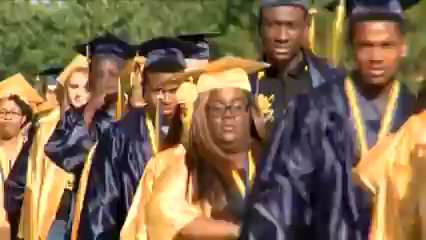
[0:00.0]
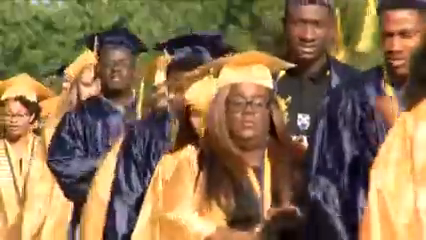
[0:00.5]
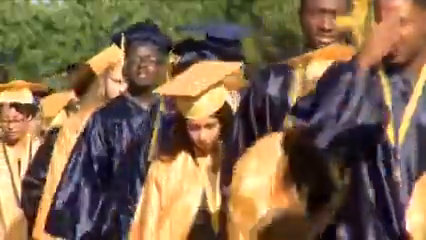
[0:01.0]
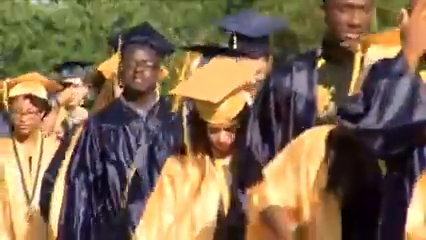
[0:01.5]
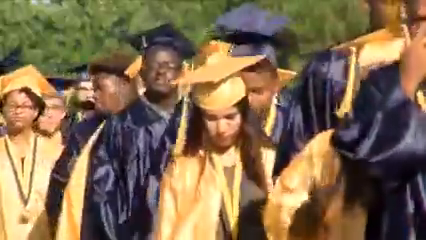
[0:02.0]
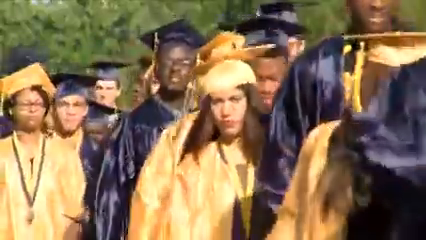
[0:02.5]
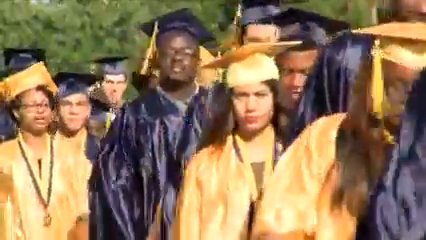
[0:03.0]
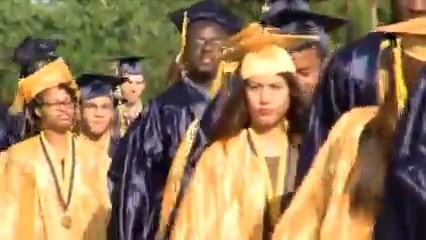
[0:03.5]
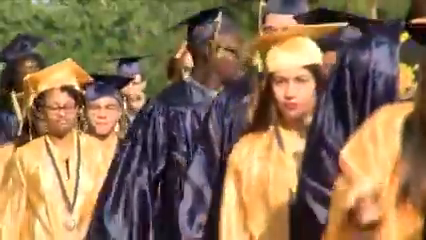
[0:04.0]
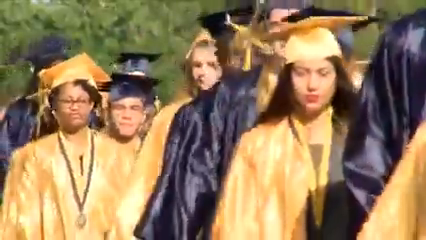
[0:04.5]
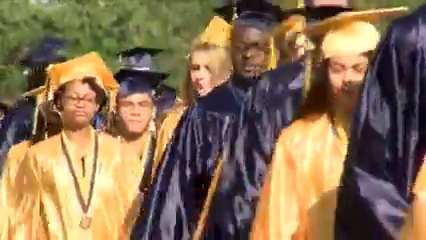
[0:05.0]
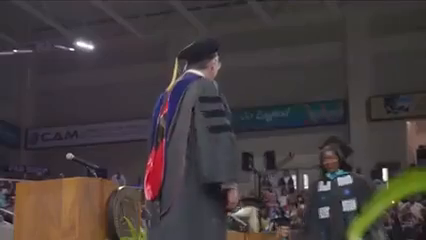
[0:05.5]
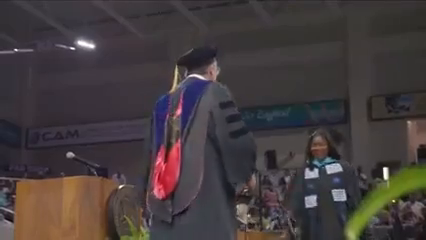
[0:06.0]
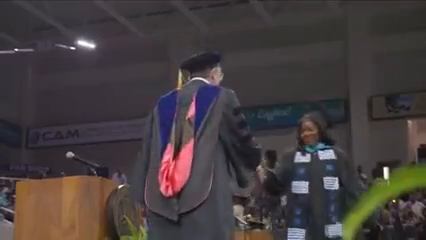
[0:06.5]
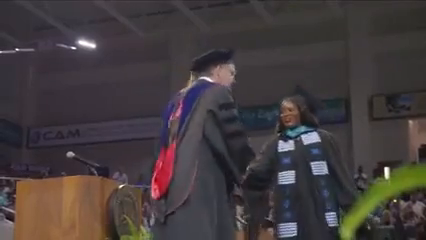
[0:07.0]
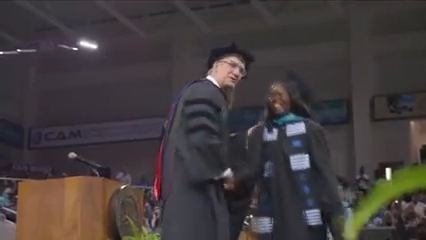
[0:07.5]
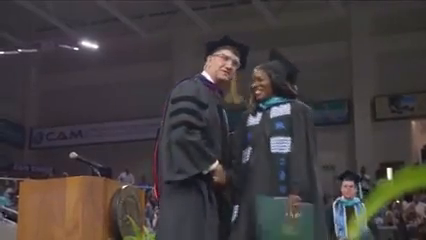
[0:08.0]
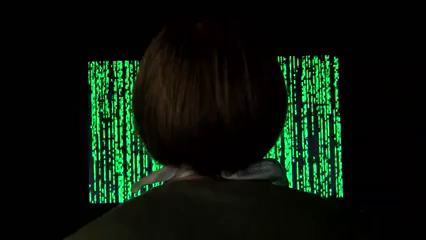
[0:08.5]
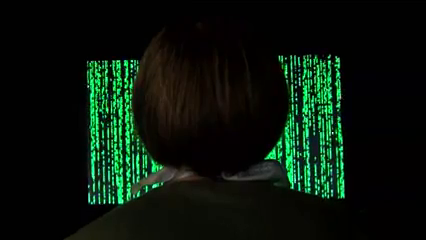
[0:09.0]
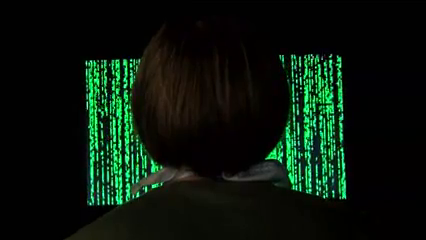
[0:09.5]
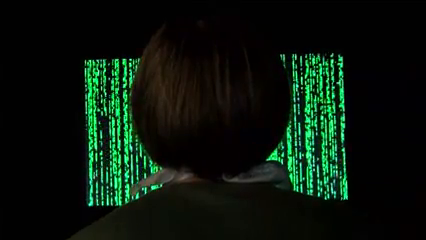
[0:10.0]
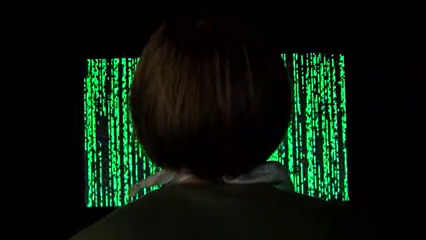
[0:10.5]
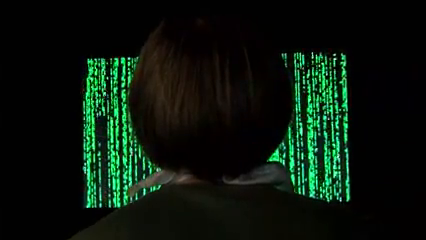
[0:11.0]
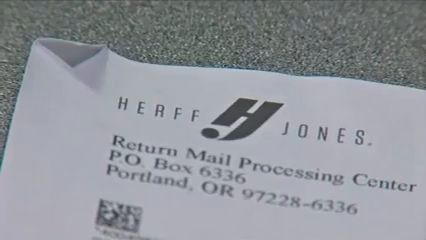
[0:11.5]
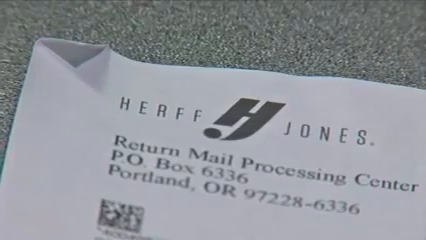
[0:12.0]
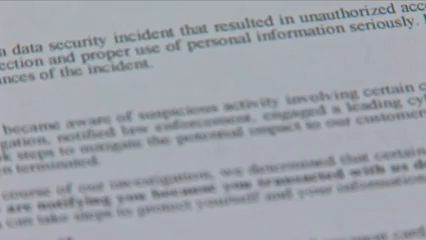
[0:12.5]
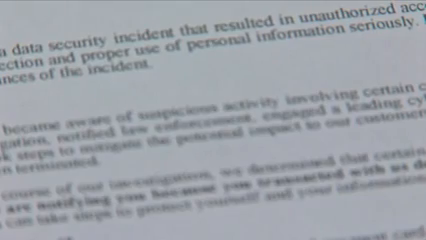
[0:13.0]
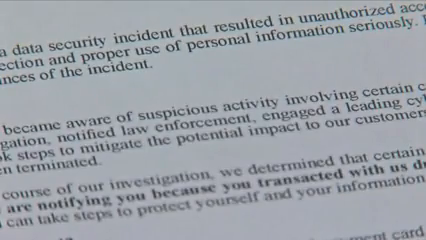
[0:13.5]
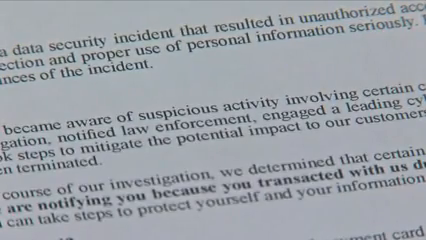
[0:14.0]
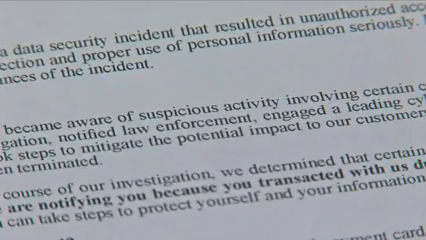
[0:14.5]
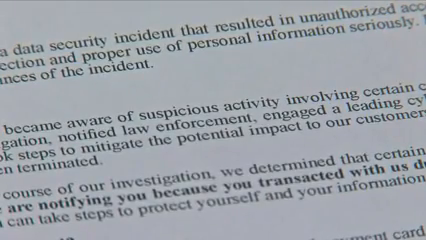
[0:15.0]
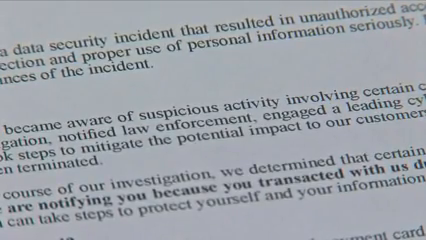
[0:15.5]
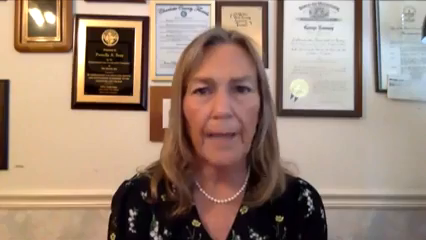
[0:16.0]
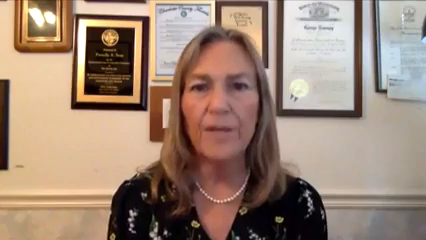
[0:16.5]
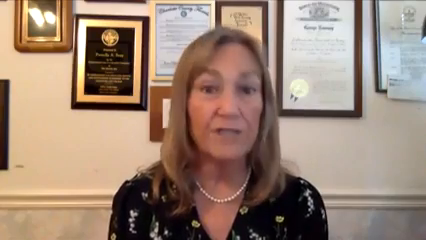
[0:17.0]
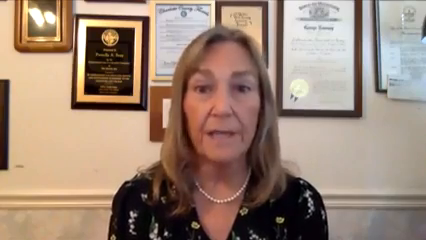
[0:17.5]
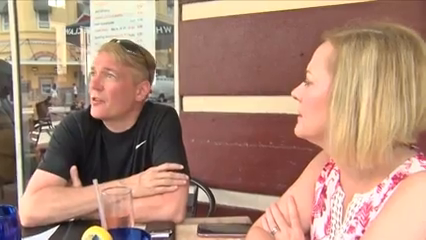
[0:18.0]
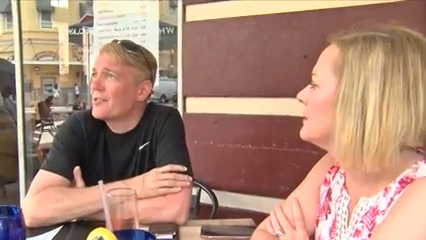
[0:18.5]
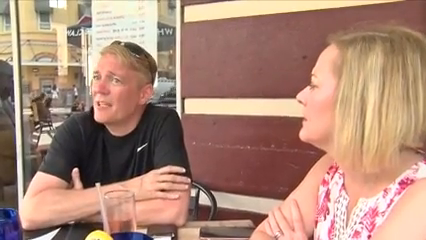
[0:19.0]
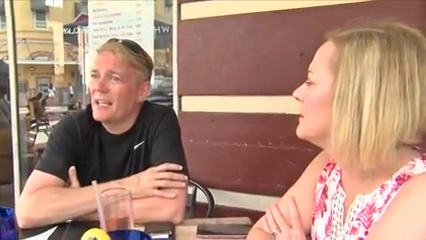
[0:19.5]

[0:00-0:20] People in graduation outfits walk toward the camera, about 20 of them; the males wear purple silks and hats and the females wear yellow. Inside a building, a man in a graduation outfit stands on a stage, wearing the silks on top, with blue and red at the back. A woman walks toward him, shakes his hand and smiles; she holds something in her left hand. Next comes the back of a woman in front of a computer screen filled with green like the Matrix, numbers and letters sort of flowing downward in a neon kind of green. A picture of a piece of paper reads "Herff Jones," followed by another part of the paper about a data security incident, zoomed in on three paragraphs. A woman then speaks to the camera. She wears a pearl necklace and a black top with some white designs, and behind her are multiple framed pictures that look like they are from different universities: diplomas and professional framed items. Then two people appear to be sitting outside a restaurant with a glass in front of them; the woman looks toward the man, and the man looks toward the camera.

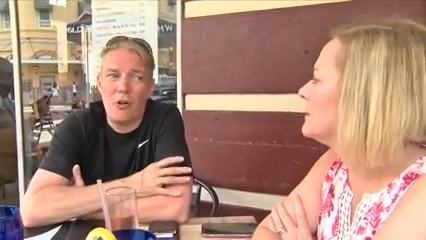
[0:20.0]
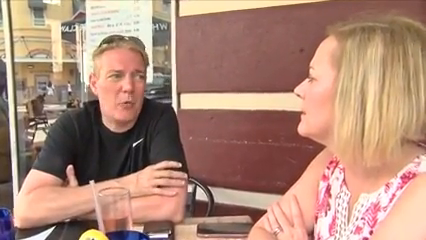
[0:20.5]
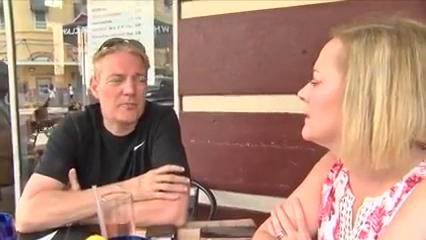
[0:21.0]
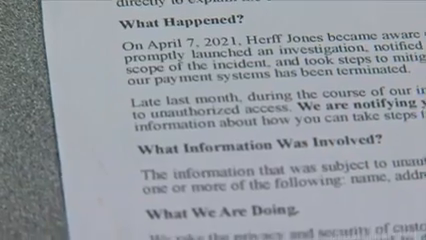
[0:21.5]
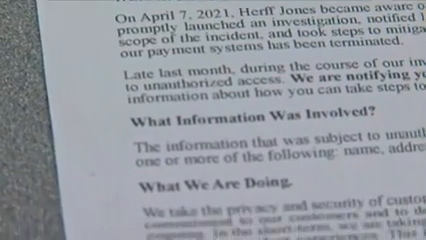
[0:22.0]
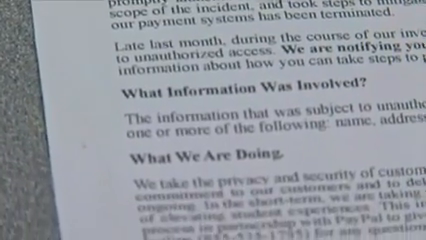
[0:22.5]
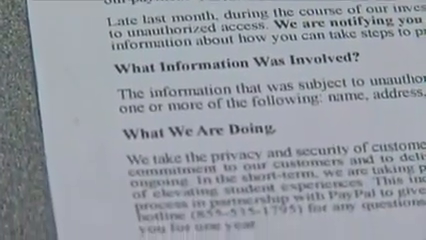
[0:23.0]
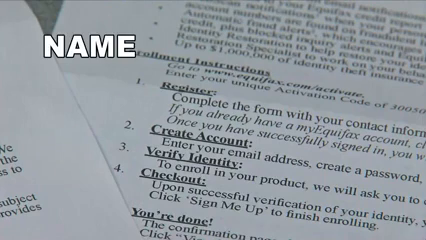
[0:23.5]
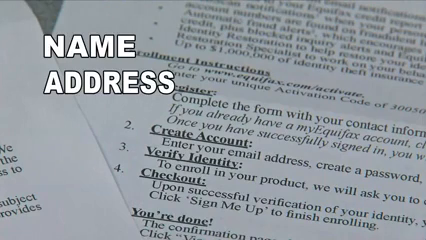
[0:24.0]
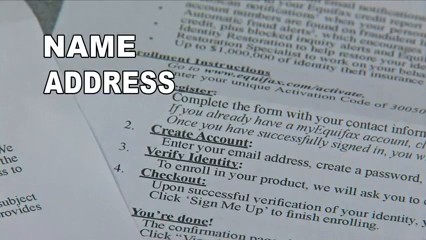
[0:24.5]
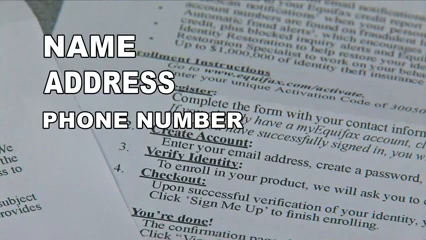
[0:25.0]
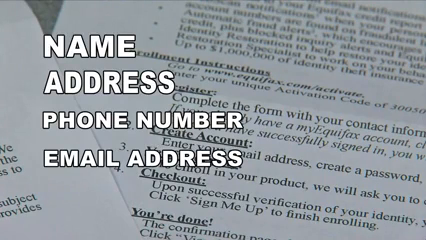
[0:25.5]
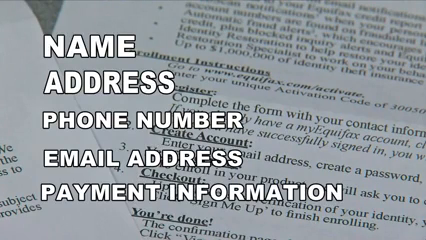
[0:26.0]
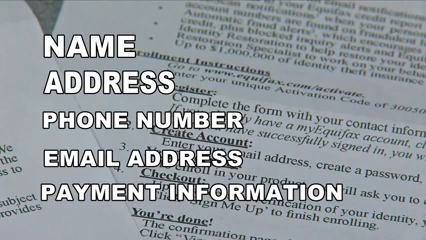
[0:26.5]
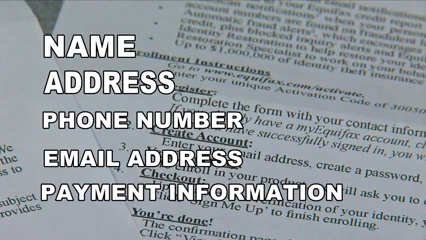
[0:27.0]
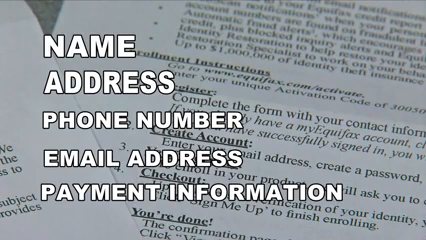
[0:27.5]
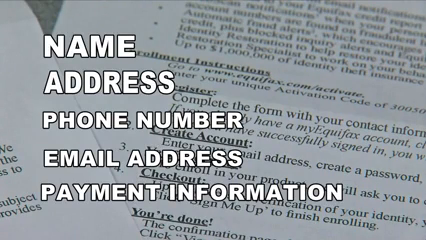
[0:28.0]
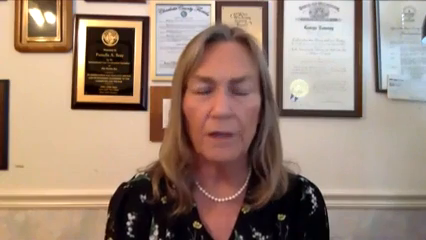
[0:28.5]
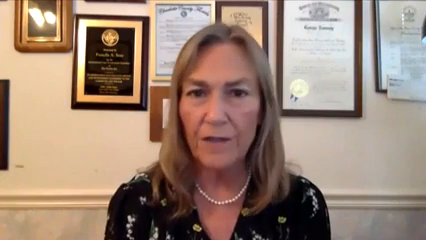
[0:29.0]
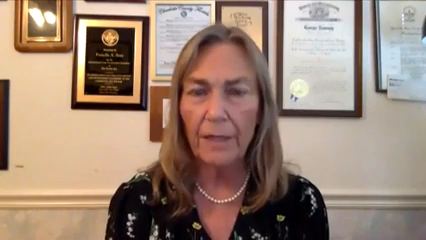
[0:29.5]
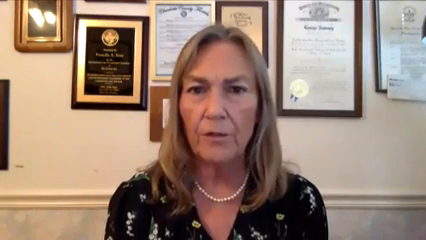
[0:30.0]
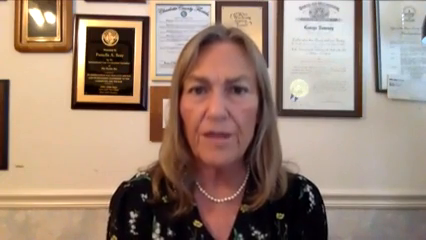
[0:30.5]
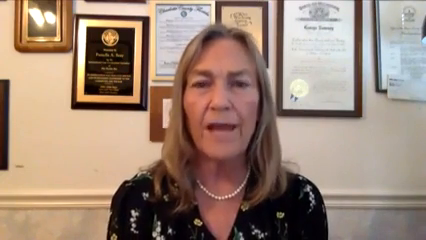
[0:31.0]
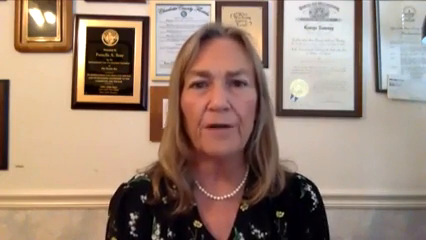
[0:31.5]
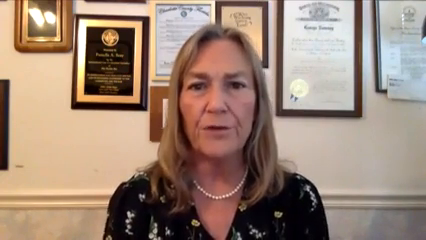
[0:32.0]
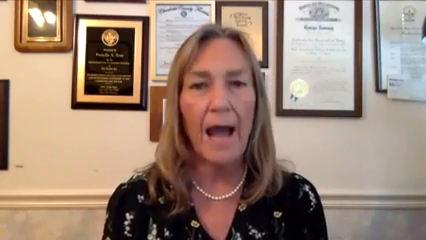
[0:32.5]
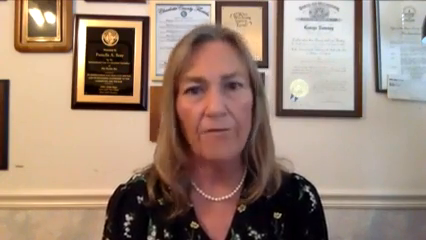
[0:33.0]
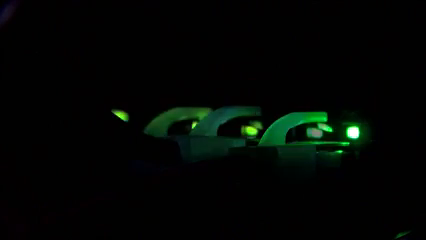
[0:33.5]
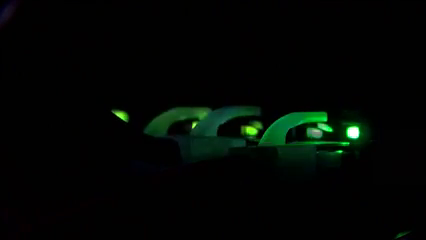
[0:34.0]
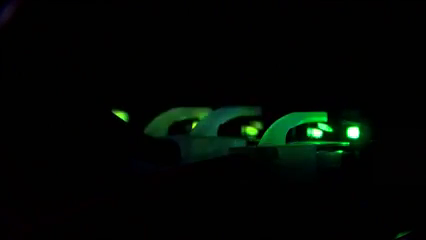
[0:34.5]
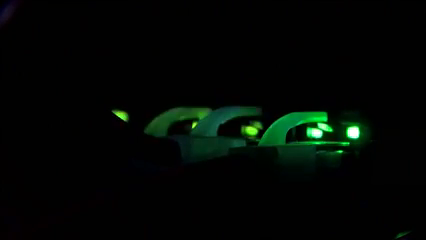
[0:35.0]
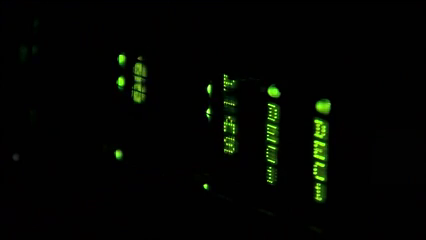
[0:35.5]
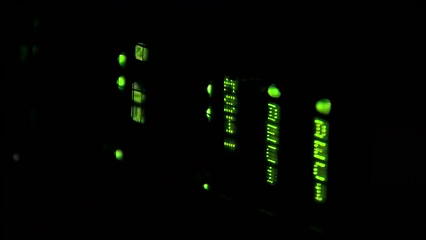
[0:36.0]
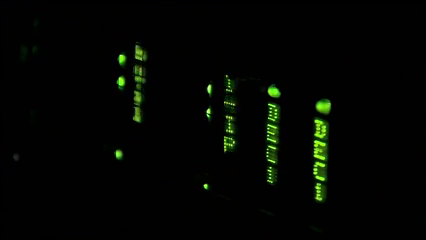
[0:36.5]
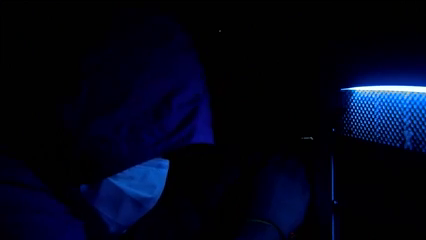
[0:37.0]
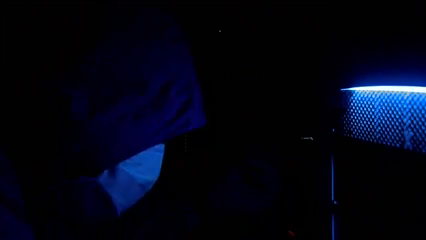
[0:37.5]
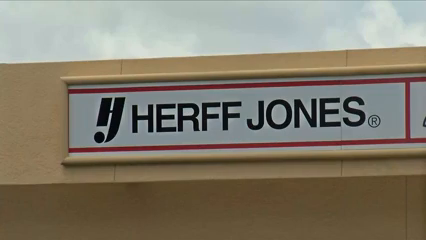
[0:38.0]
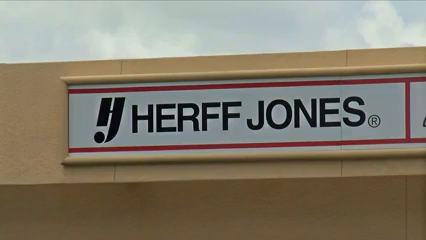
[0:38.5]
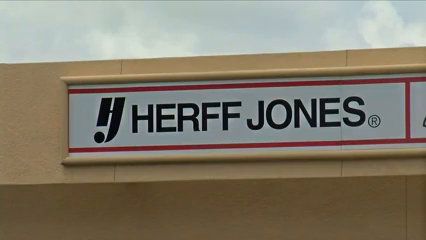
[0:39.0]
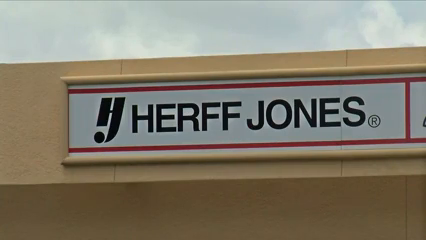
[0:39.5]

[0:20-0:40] Another piece of paper is zoomed in on; it says that on April 7th, 2021, something happened involving Herff Jones, and mentions an investigation. Then white block letters on the screen read "name, address, phone number, email address, payment information." The woman with the pearl necklace speaks to the camera again; her hair reaches just below her shoulders, and the wall behind her is beige. Green lights flash as if inside a computer, and then a dark room with a light blue light appears. A sign outside the Herff Jones building is shown. The view returns to the zoomed-in piece of paper, which reads "what happened," "what information was involved" and "what we are doing." The neon-like green lights flash very quickly, and a shot shows letters in that sort of green light; some read "A-S-I" and another reads "D-E-C-I."